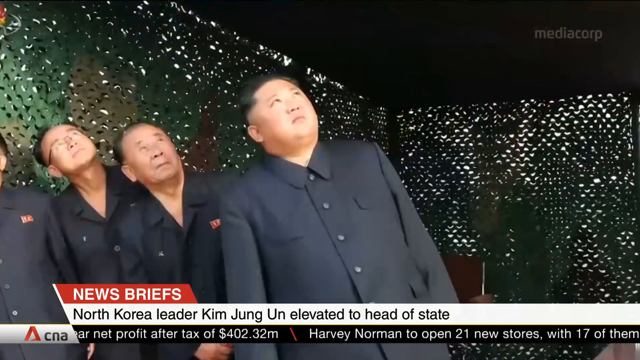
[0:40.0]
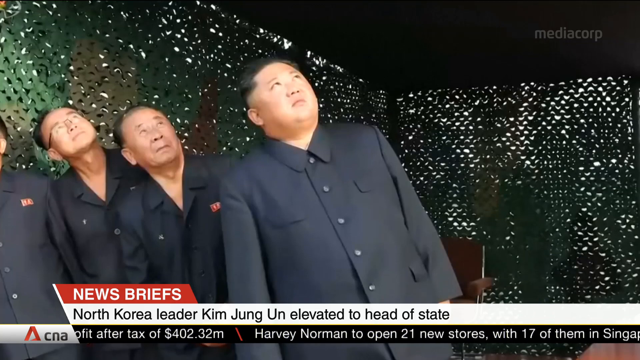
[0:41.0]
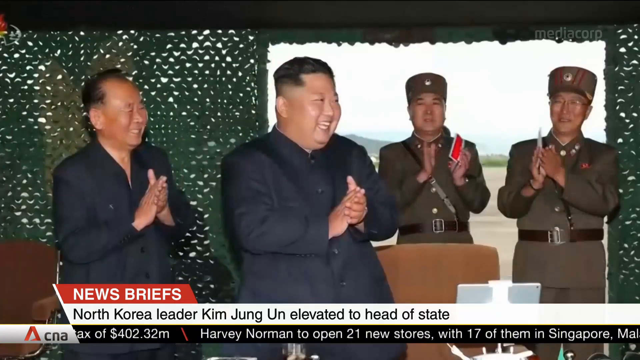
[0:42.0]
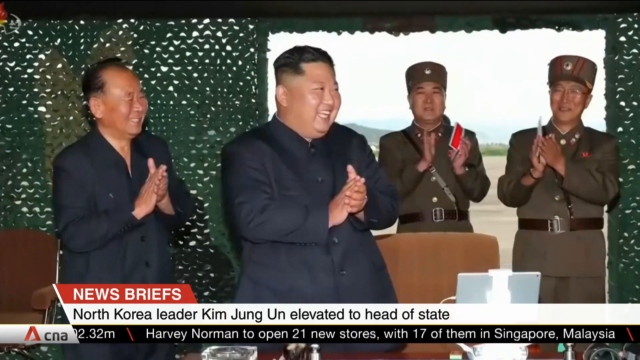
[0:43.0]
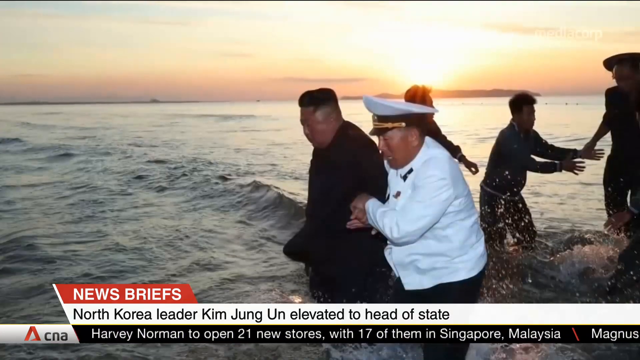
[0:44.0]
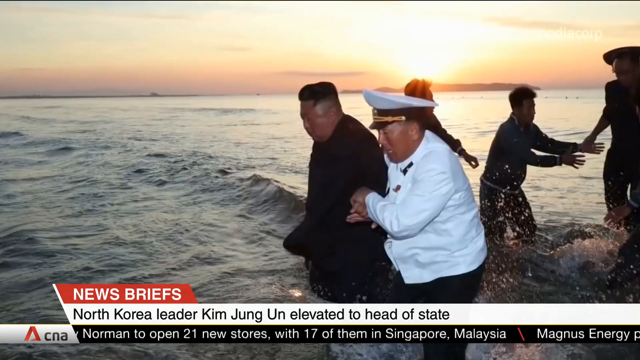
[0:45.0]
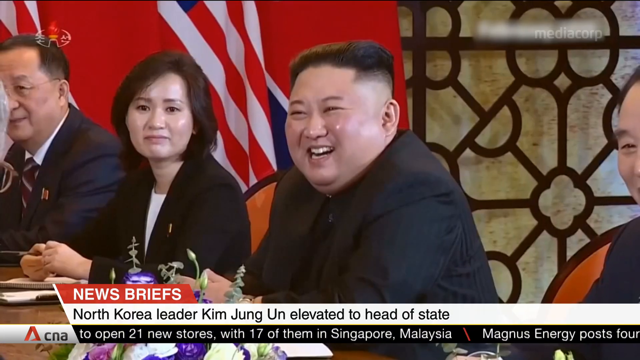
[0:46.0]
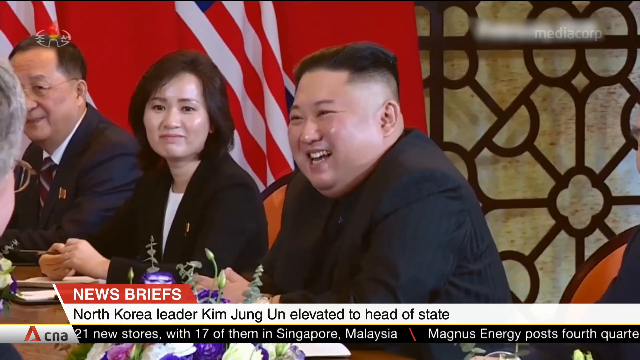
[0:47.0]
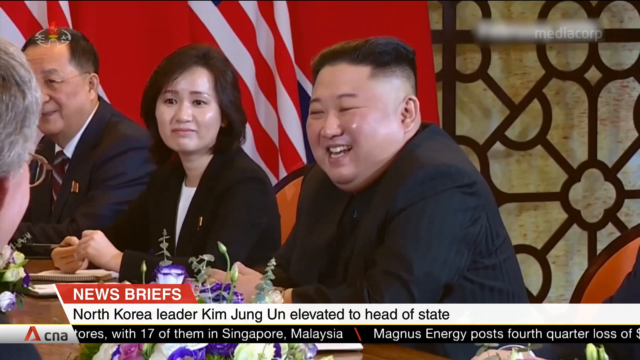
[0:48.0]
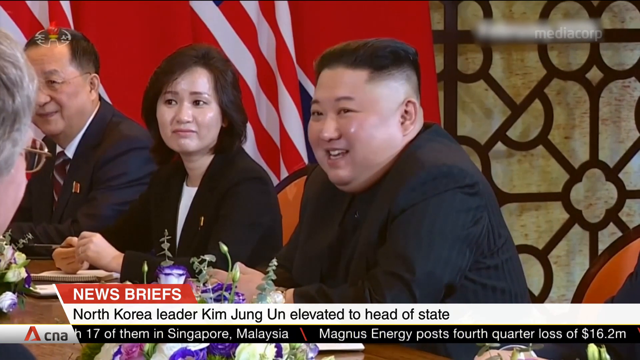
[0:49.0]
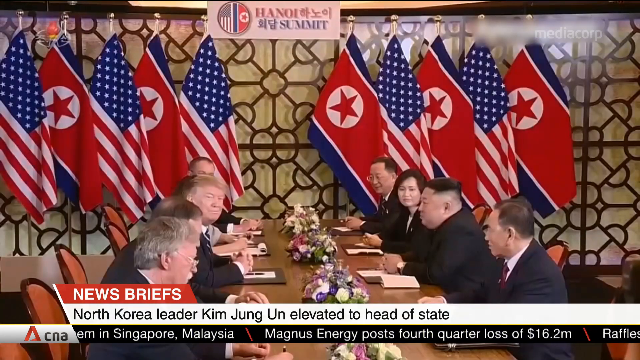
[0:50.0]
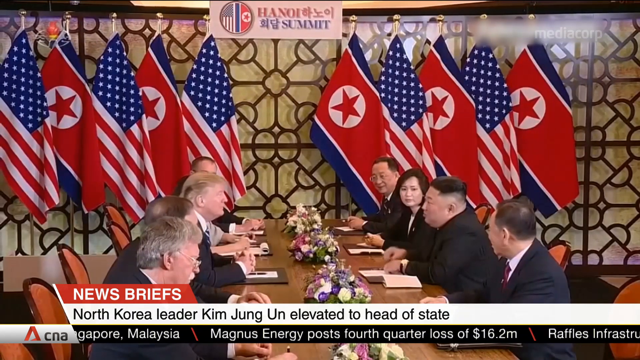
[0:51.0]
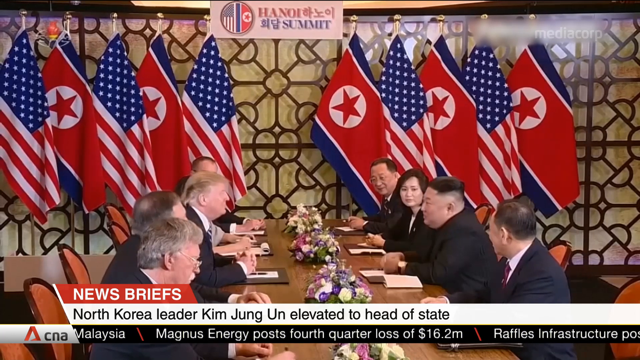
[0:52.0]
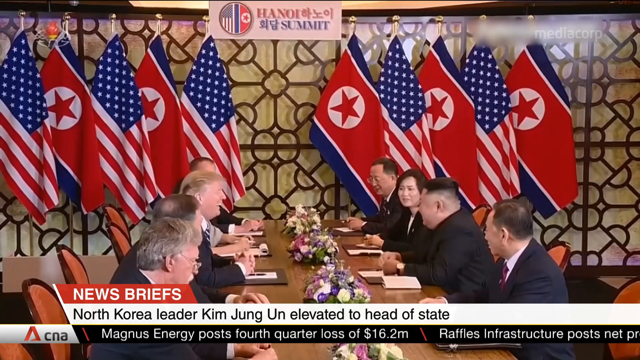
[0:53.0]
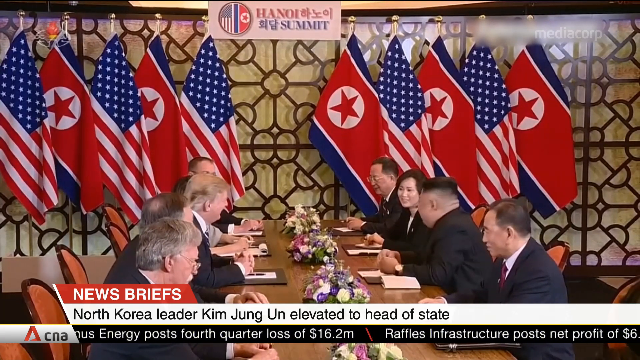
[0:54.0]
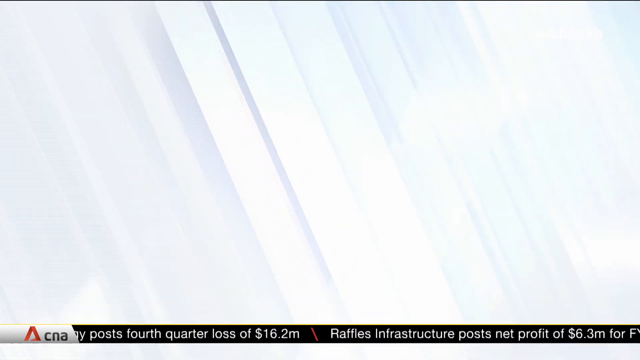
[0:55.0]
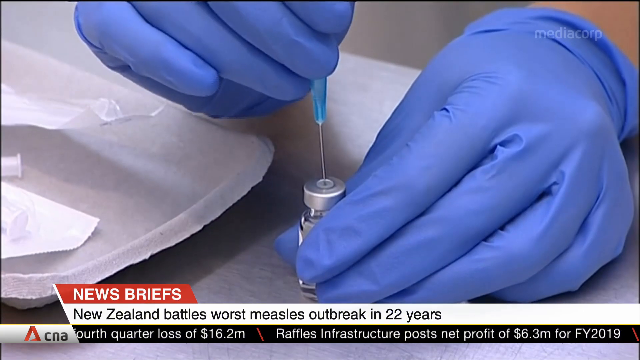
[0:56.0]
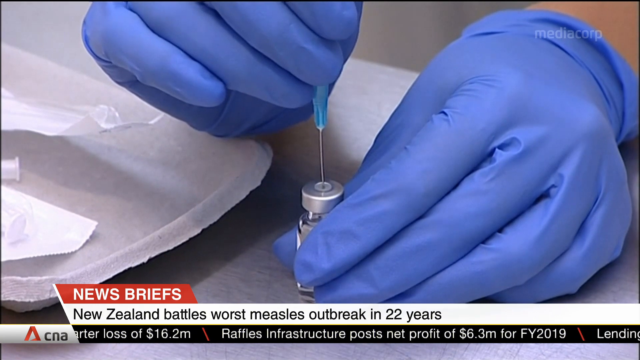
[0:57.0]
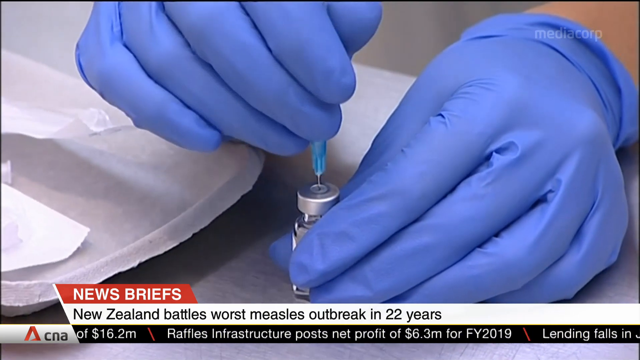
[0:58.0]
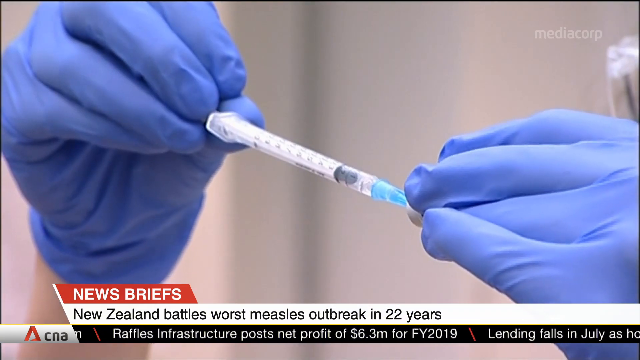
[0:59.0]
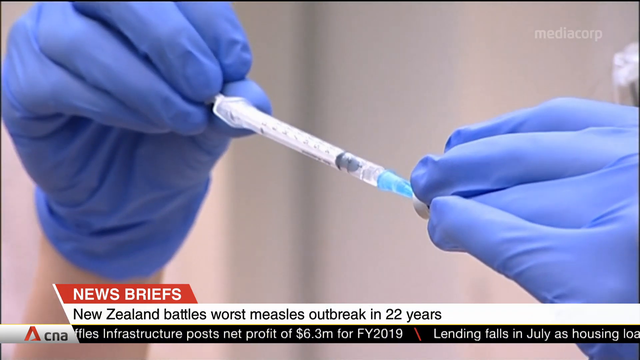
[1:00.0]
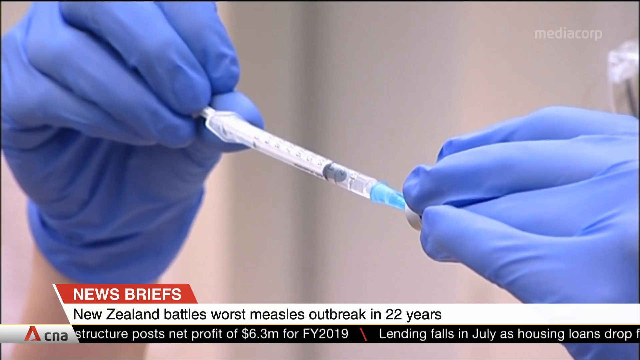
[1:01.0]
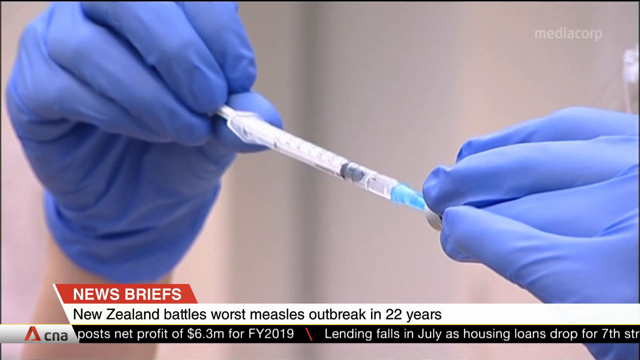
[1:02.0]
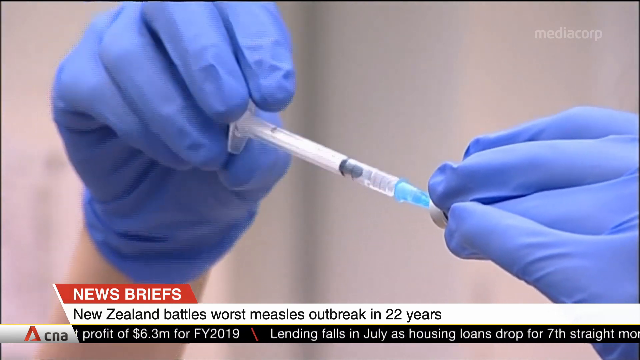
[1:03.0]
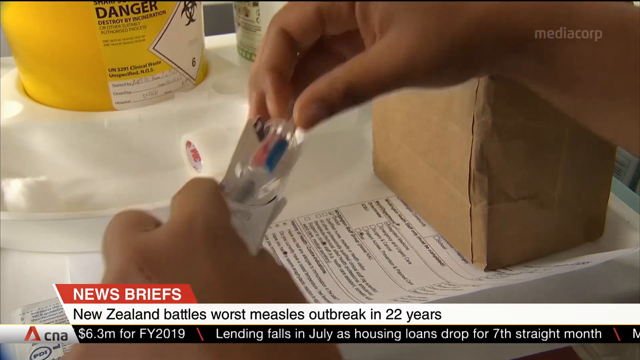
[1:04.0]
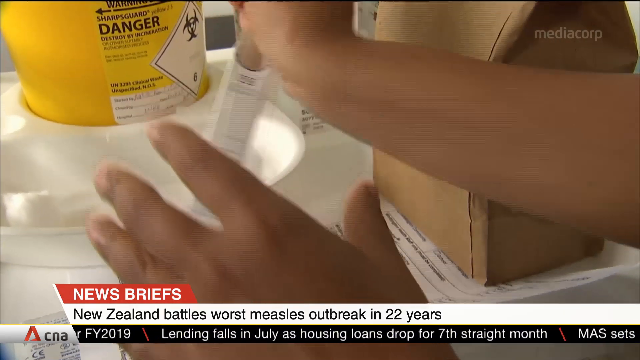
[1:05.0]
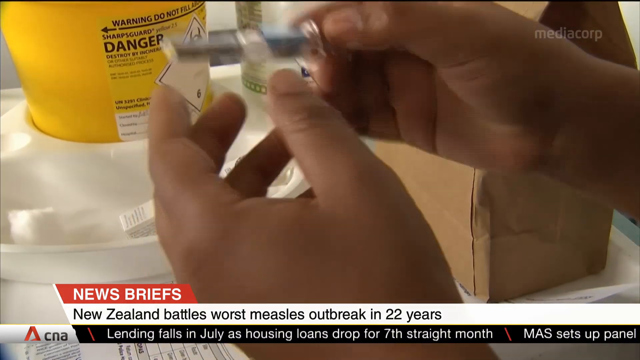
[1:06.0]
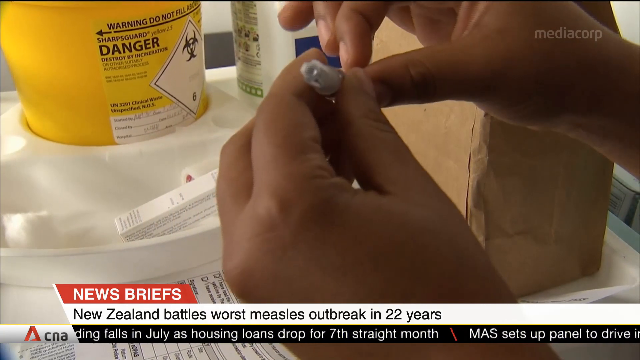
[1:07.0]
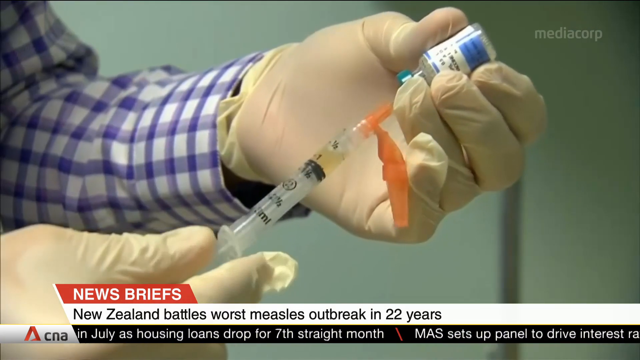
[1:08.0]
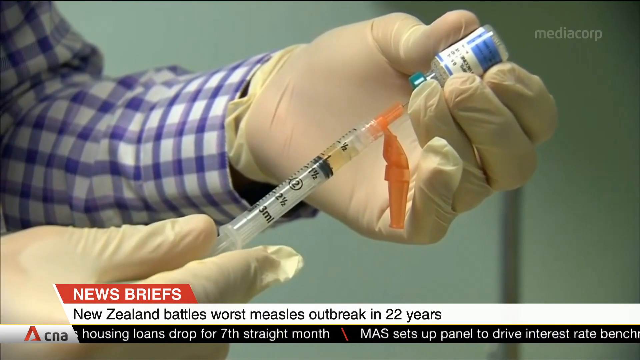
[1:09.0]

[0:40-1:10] More images of Kim Jong-un follow: he looks upward, then laughs. Another picture shows him walking across what looks like a sunset. He is then shown at a board meeting, laughing, with a short black cut, sort of a box cut. Next he appears in a meeting with Donald Trump, laughing with him. What appears to be a completely different story follows, with the text "news brief New Zealand battles worst measles outbreak in 22 years." Someone wearing gloves takes a bottle and draws the liquid into a syringe; the liquid is probably the medicine or vaccine for measles. The needle looks very thin.